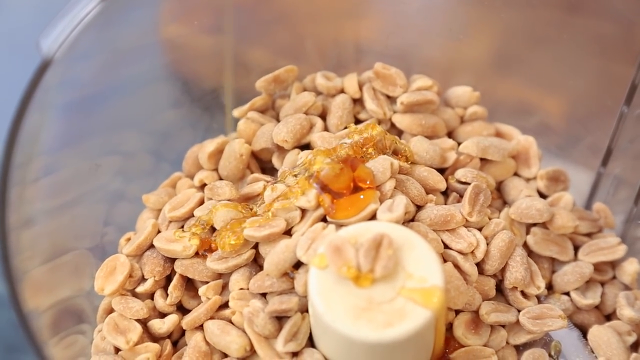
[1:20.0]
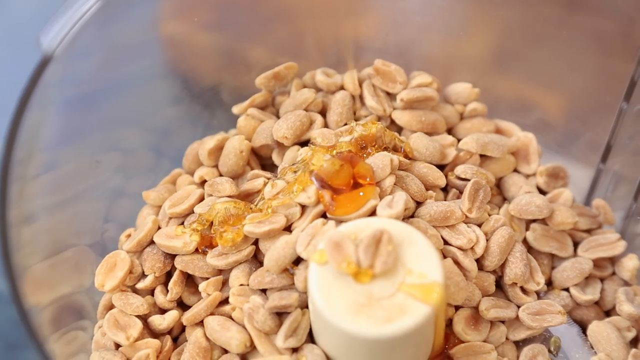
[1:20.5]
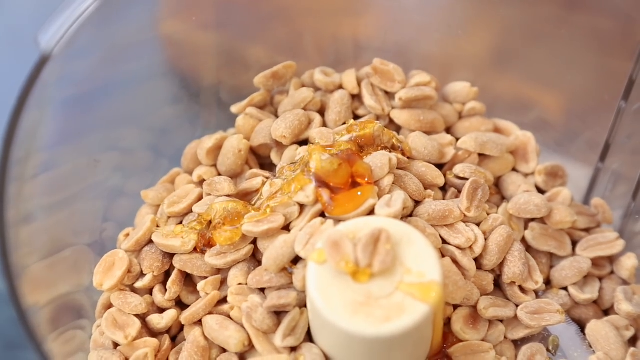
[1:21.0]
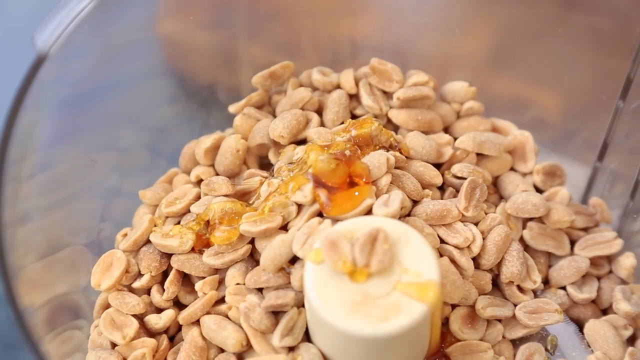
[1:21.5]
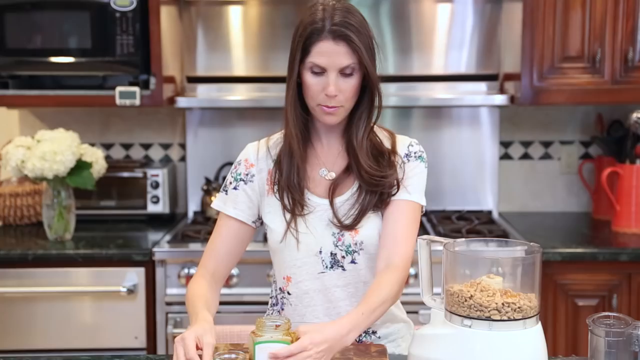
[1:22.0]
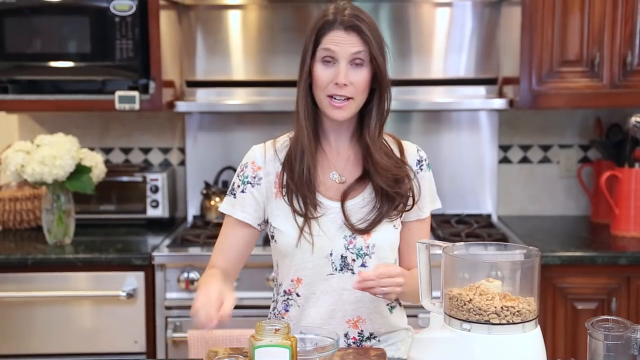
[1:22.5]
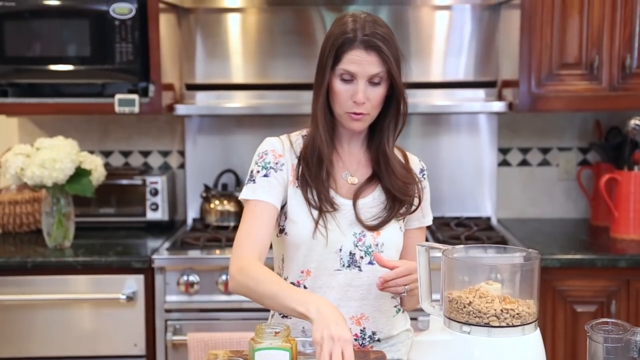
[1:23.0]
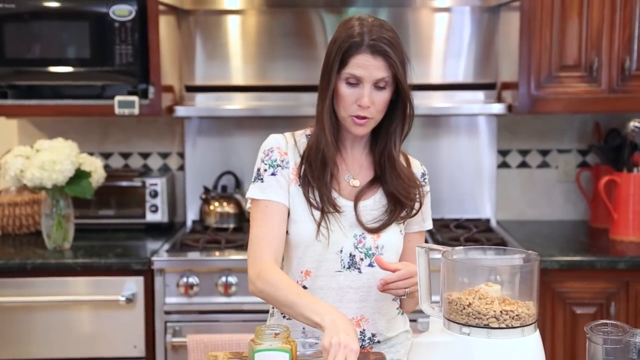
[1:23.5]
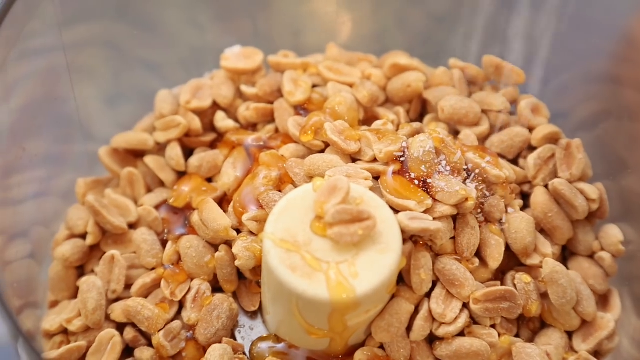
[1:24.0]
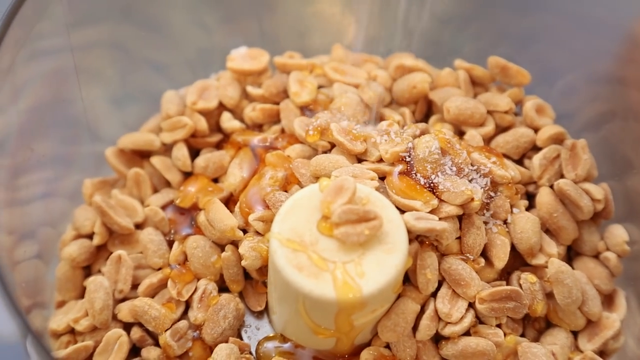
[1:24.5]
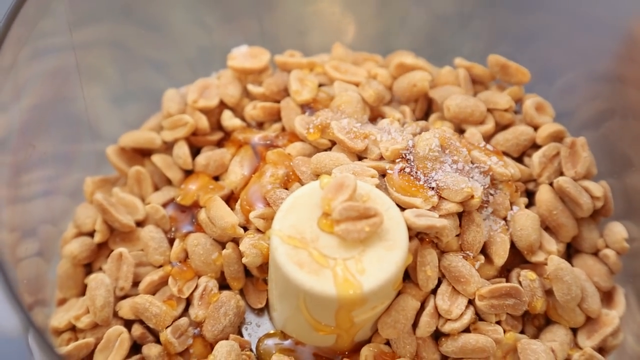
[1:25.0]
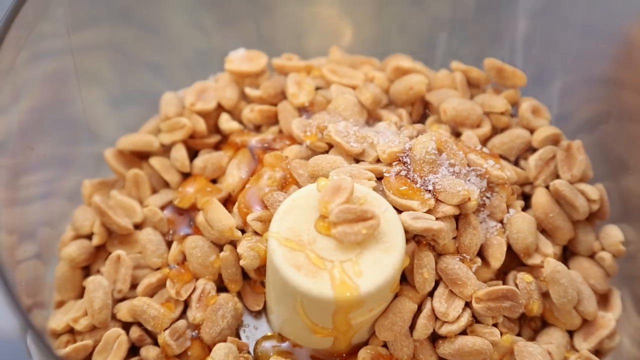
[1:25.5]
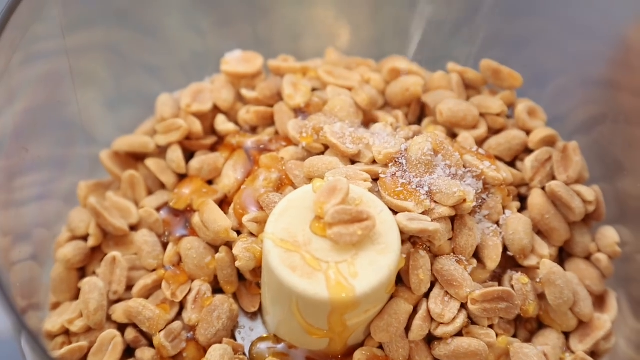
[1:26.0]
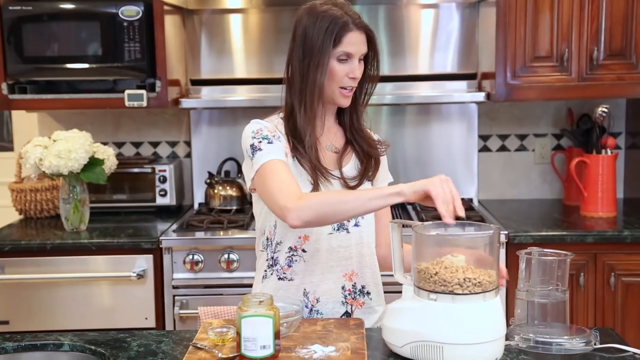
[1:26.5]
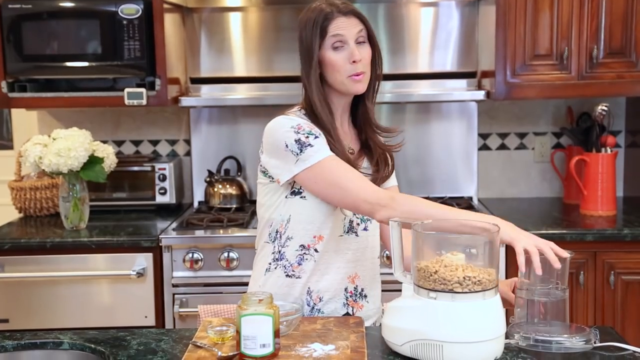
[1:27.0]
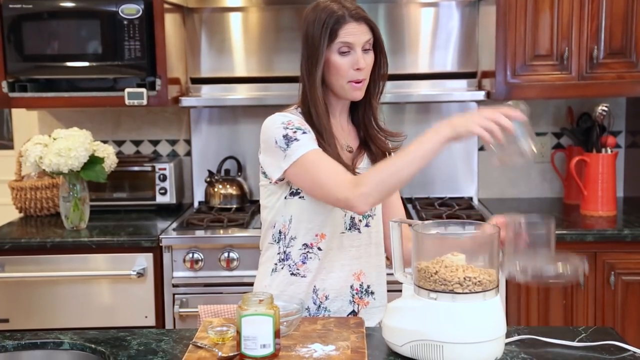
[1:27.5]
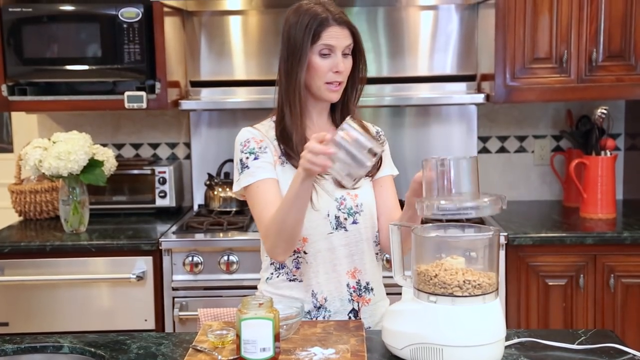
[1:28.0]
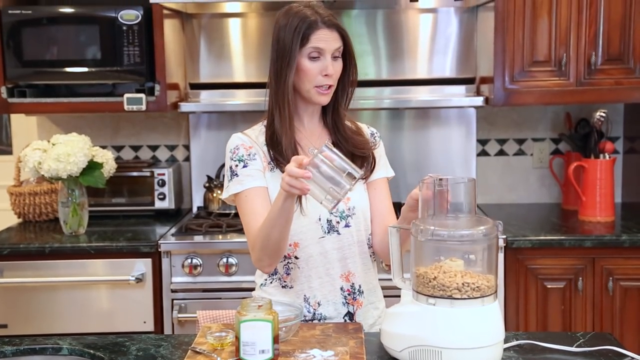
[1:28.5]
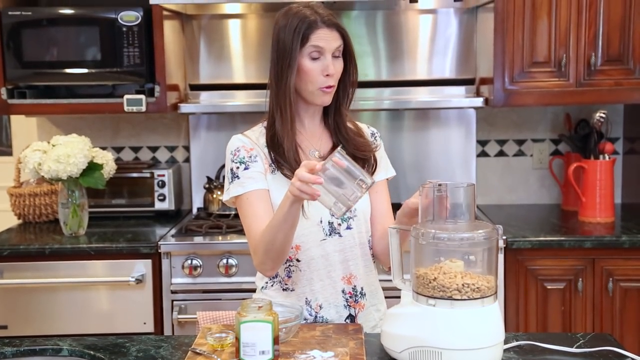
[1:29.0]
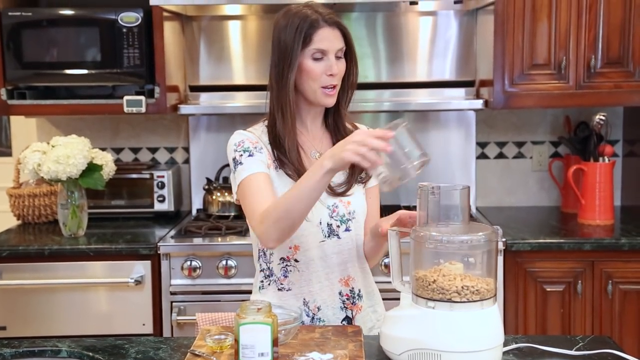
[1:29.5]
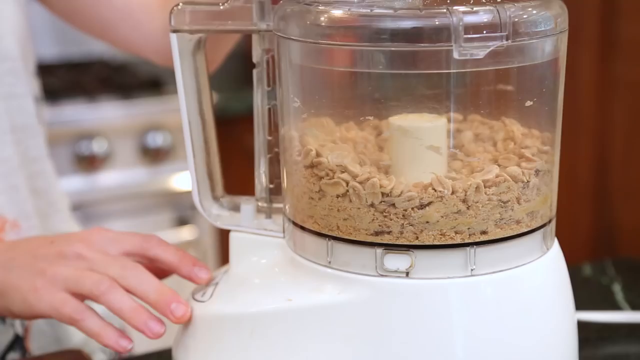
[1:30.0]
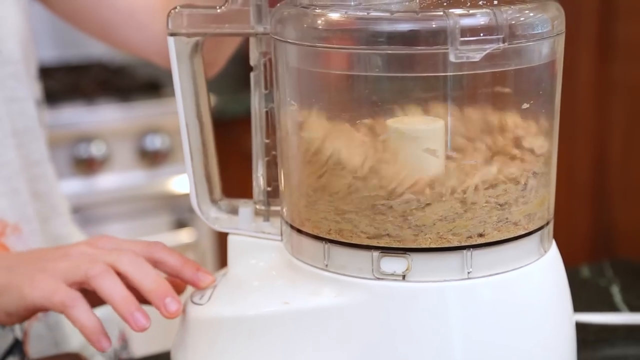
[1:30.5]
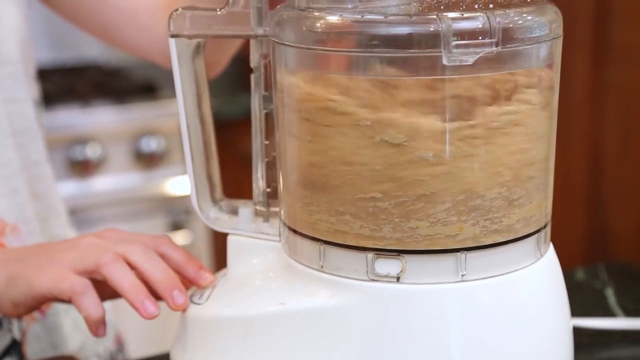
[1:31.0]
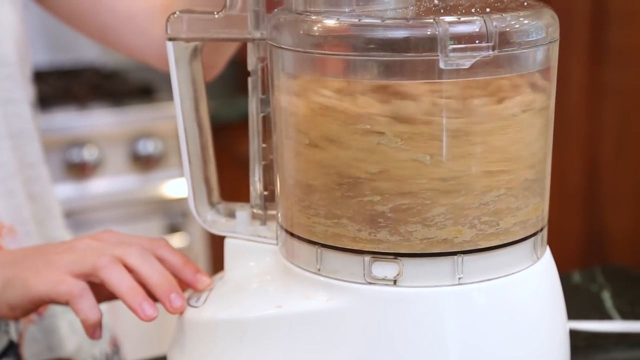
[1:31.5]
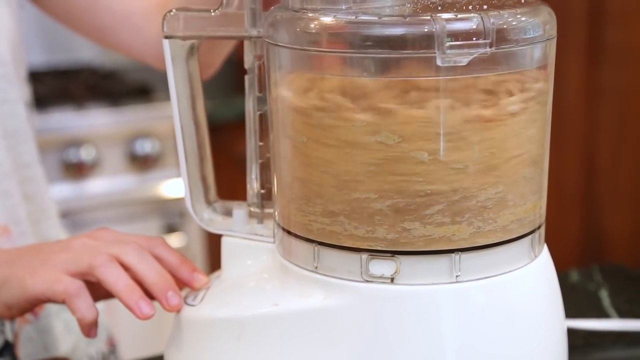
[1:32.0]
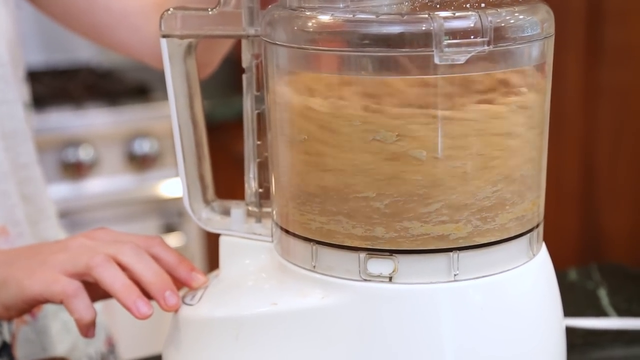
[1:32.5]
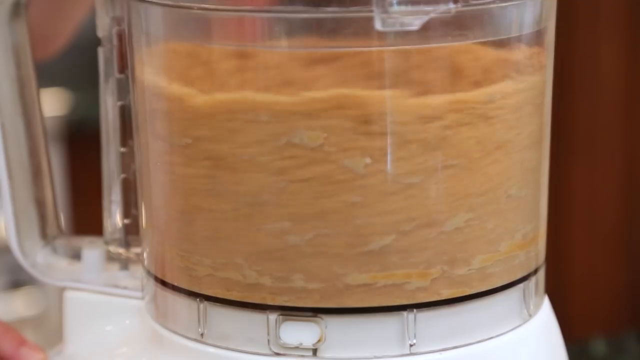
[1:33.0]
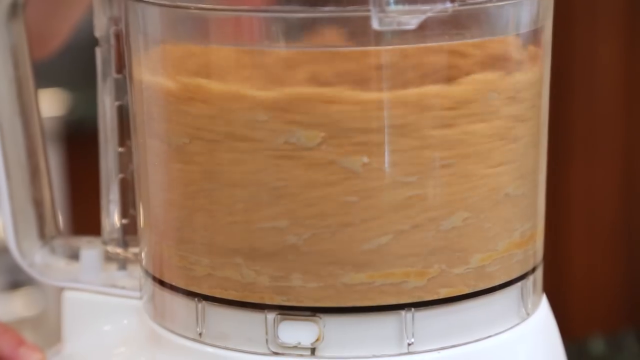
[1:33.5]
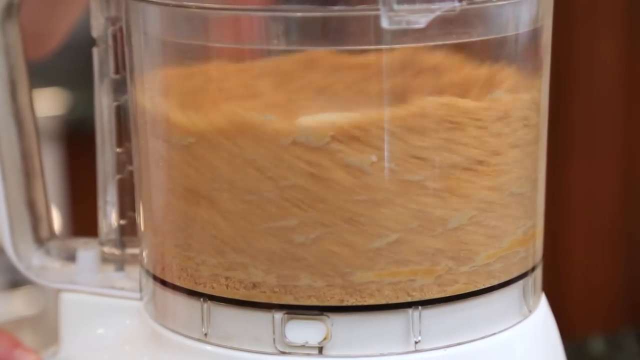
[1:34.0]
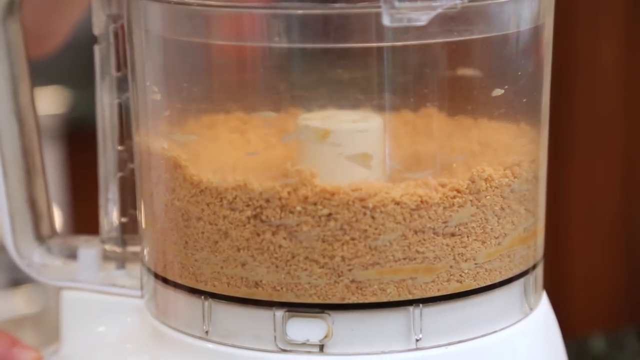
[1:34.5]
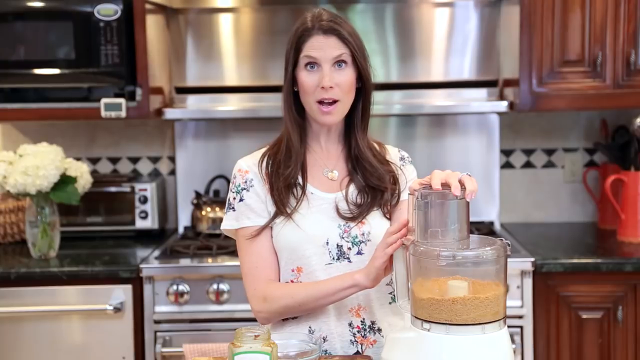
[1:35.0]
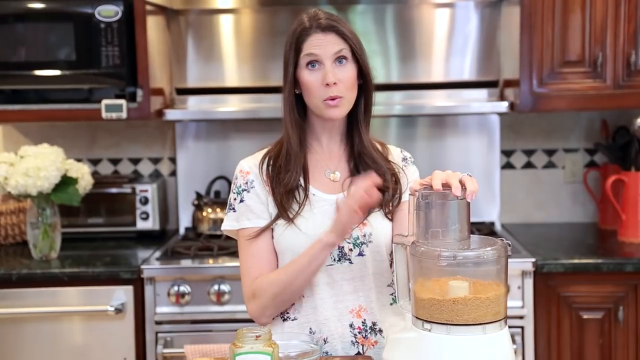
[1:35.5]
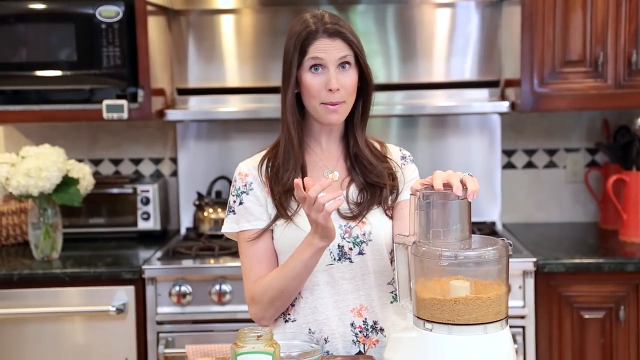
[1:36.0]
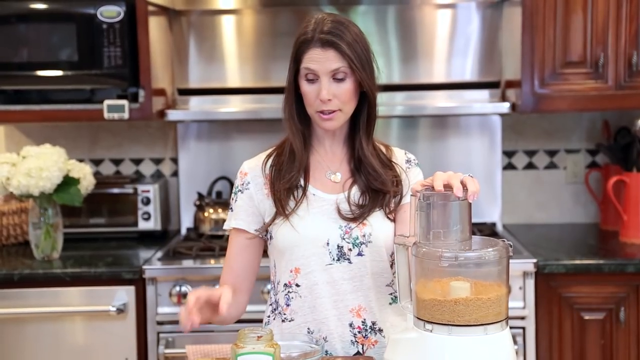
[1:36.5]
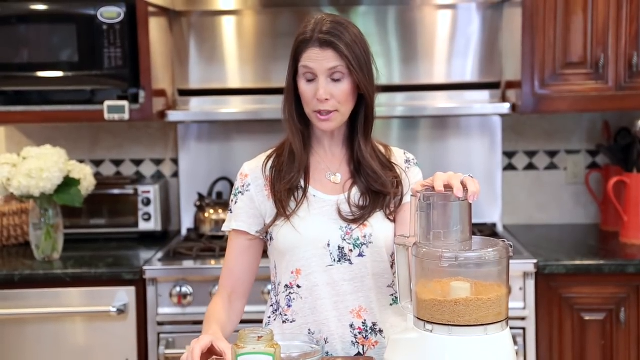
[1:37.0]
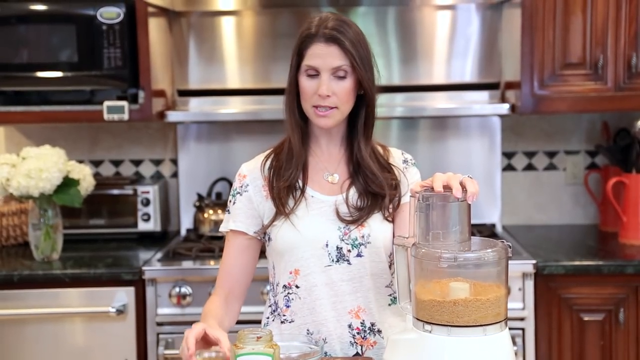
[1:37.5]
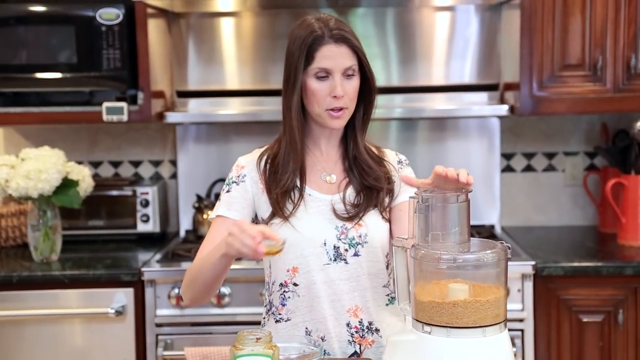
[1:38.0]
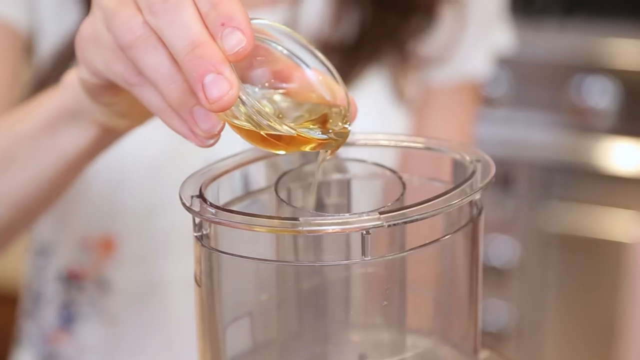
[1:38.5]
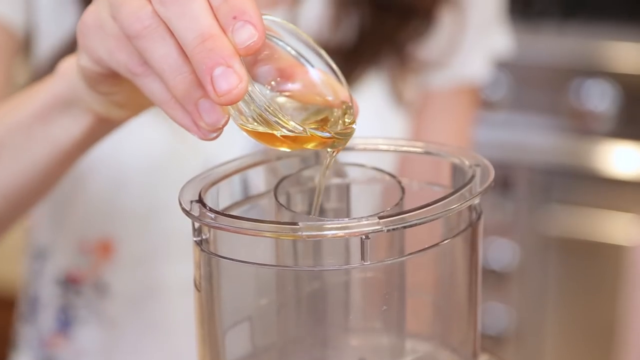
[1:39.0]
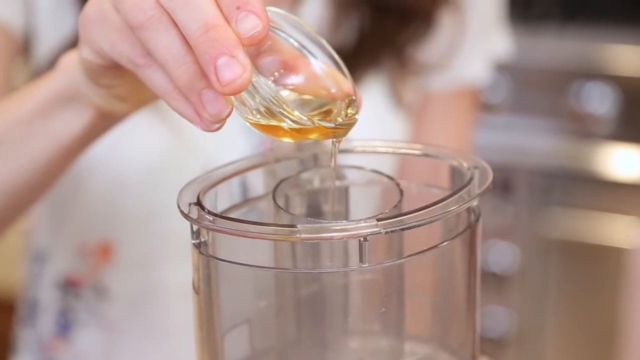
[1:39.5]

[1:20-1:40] With the peanuts in the white blender, she pours in honey, and the golden-brown honey lands on top of the peanuts. She then adds what appears to be white salt on top of the peanuts and honey. She places a white or colourless lid on top of the blender and presses a button, and the blender starts stirring and cutting the peanuts into very small particles. With her right hand on top of the blender lid, she keeps explaining, while her left hand picks up what appears to be oil and pours it into the mixture.